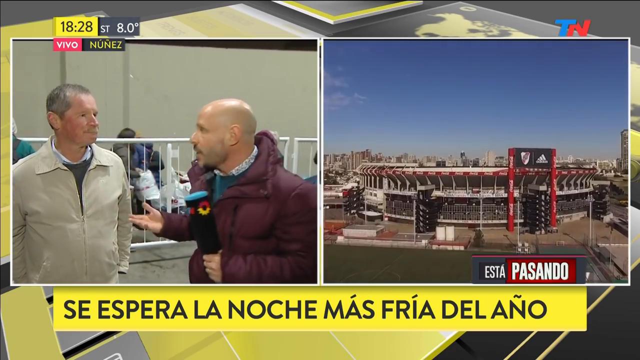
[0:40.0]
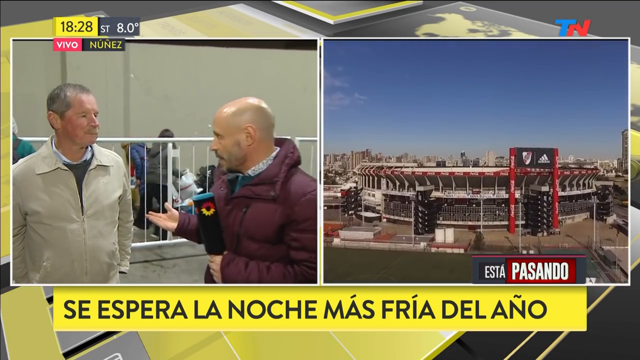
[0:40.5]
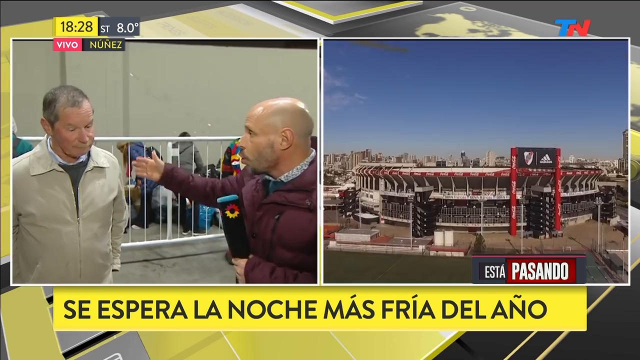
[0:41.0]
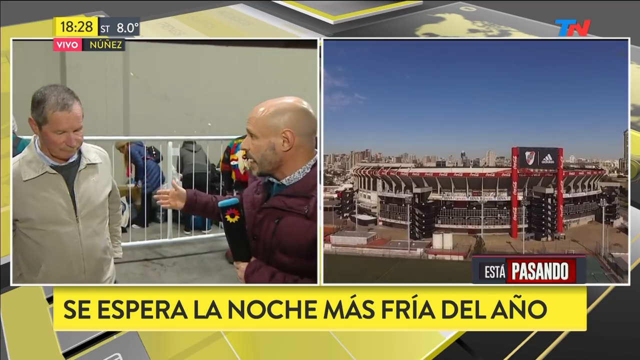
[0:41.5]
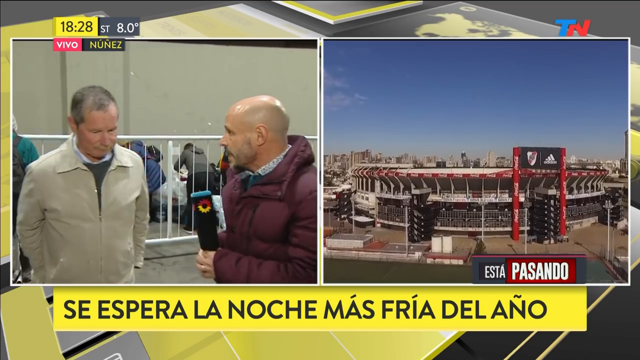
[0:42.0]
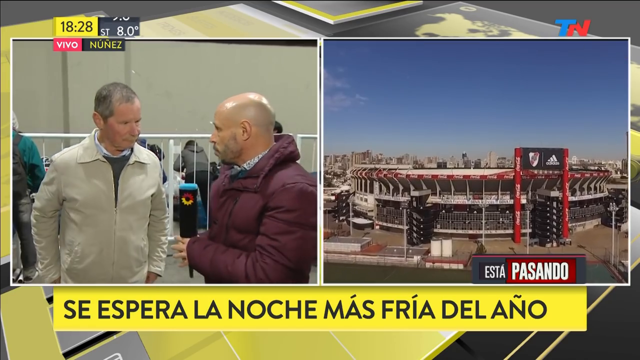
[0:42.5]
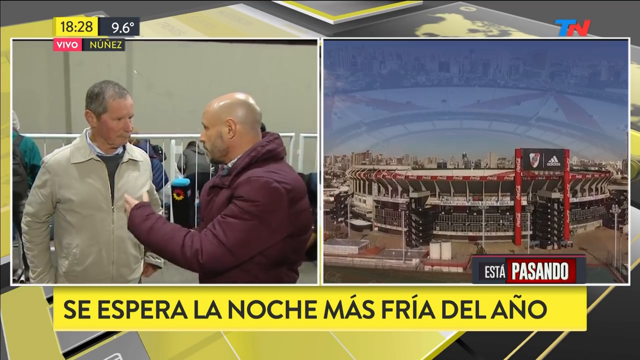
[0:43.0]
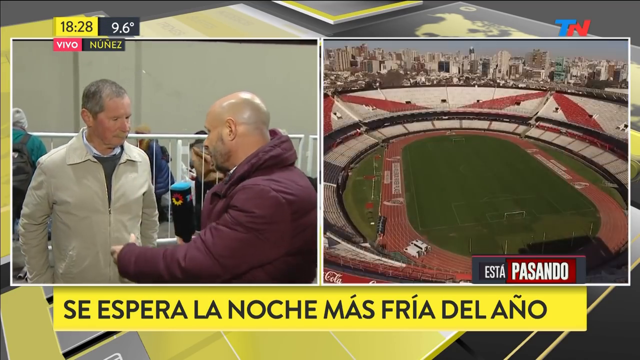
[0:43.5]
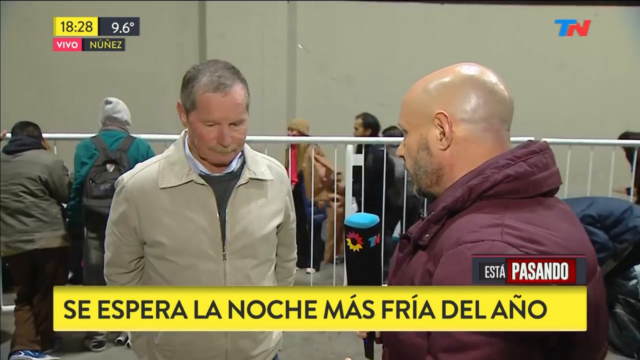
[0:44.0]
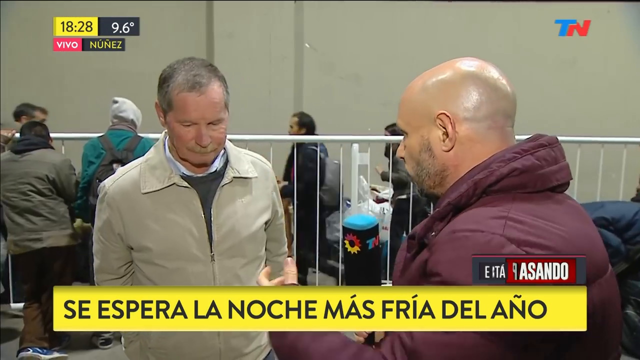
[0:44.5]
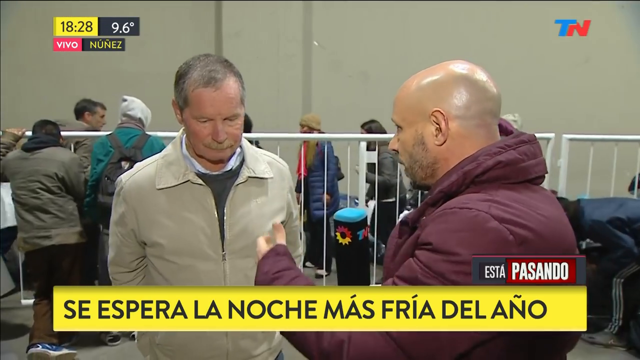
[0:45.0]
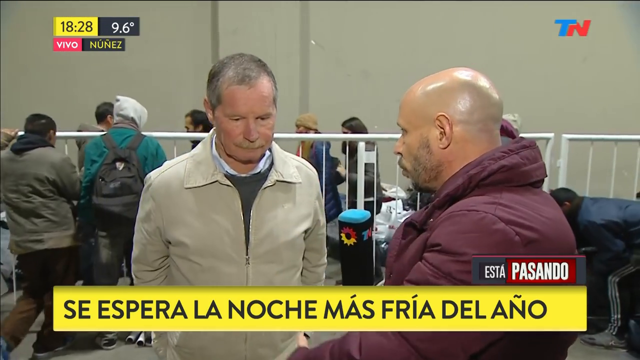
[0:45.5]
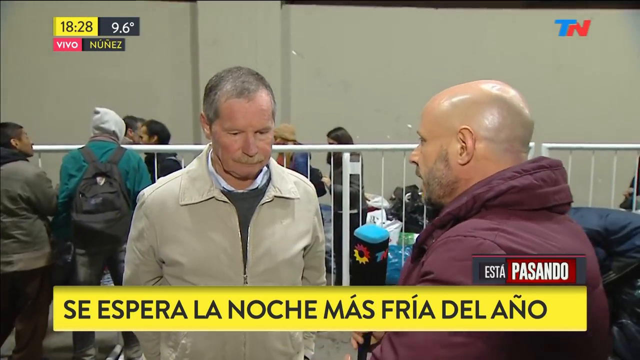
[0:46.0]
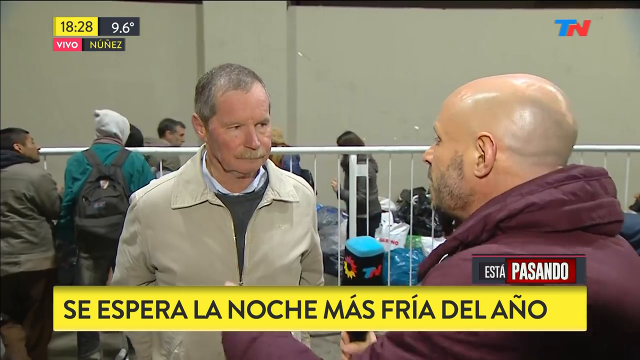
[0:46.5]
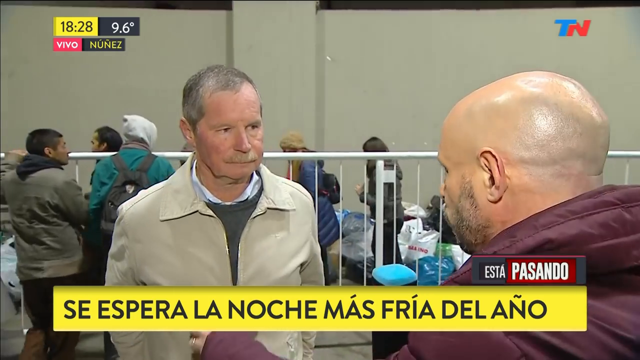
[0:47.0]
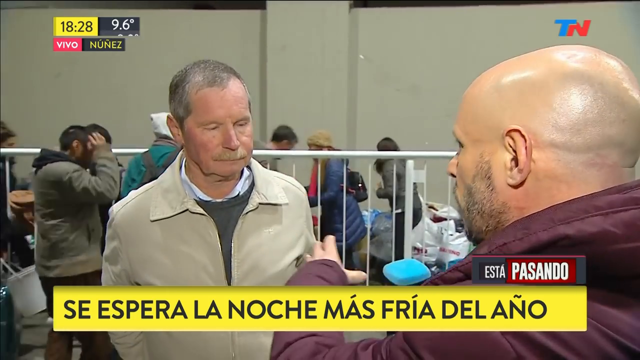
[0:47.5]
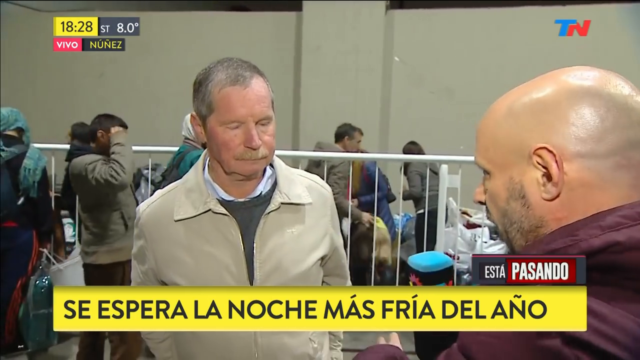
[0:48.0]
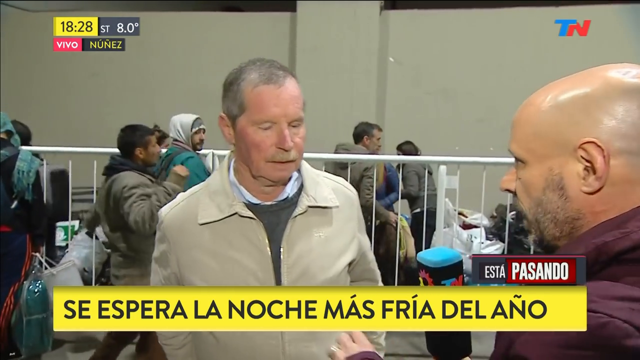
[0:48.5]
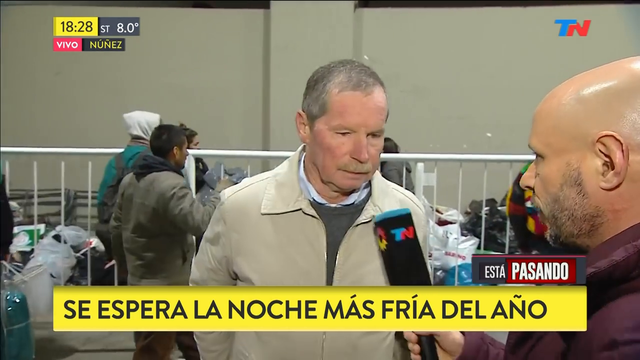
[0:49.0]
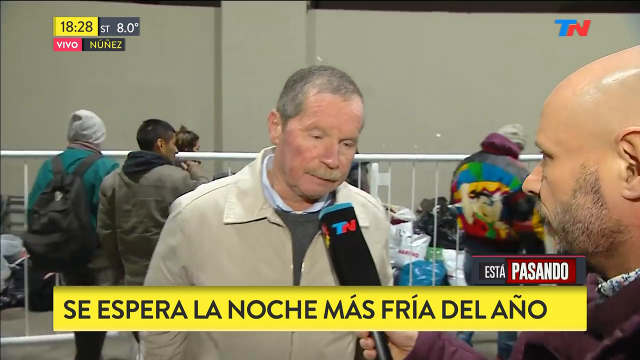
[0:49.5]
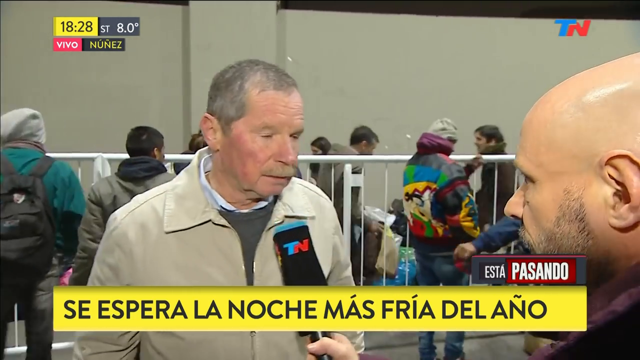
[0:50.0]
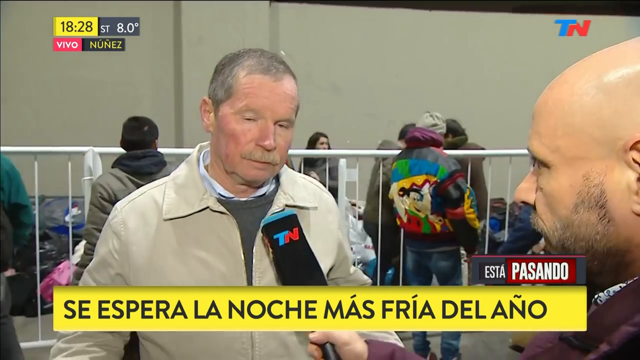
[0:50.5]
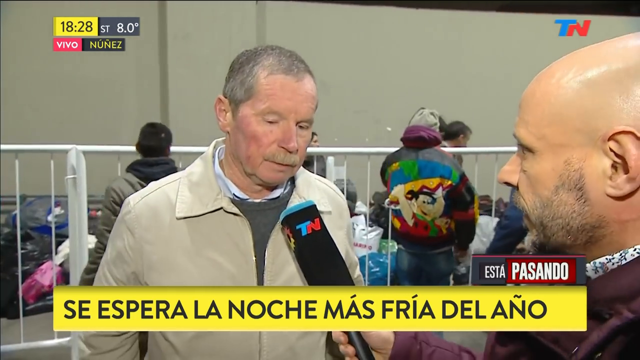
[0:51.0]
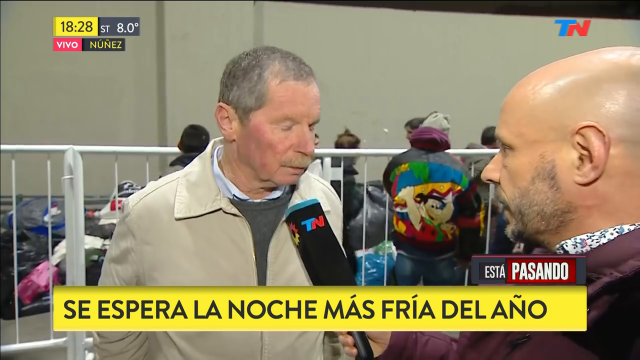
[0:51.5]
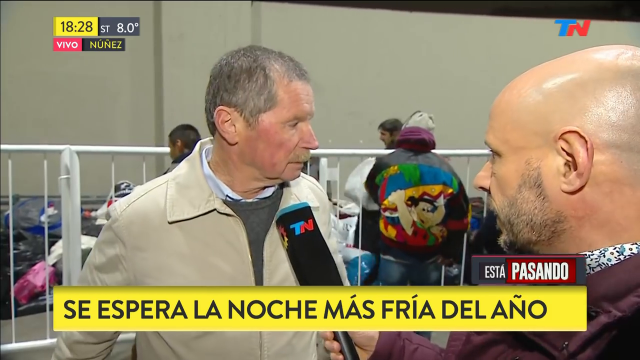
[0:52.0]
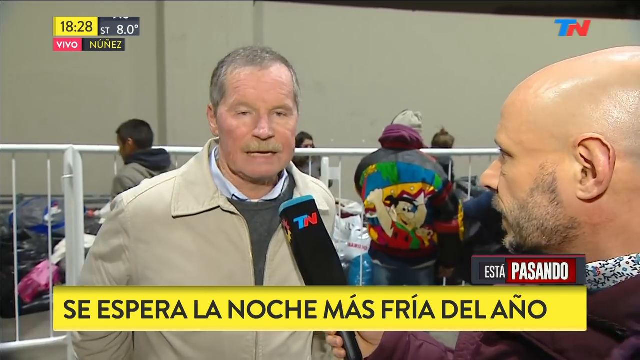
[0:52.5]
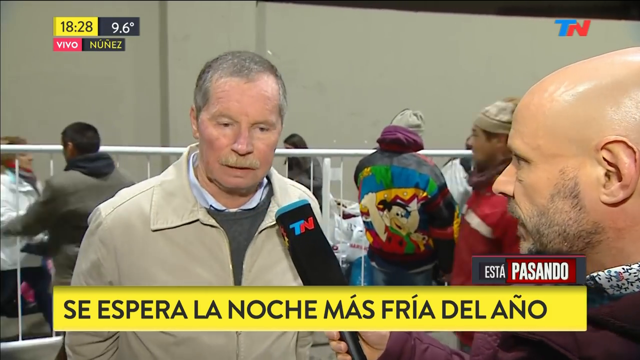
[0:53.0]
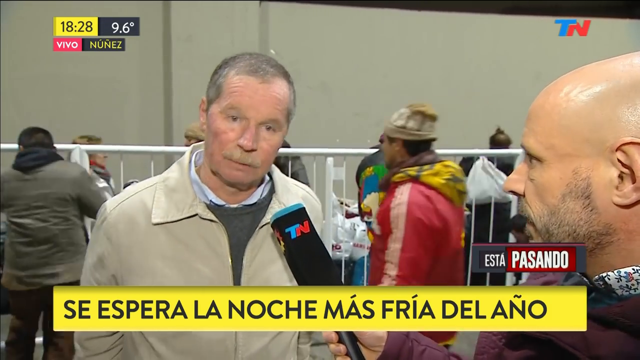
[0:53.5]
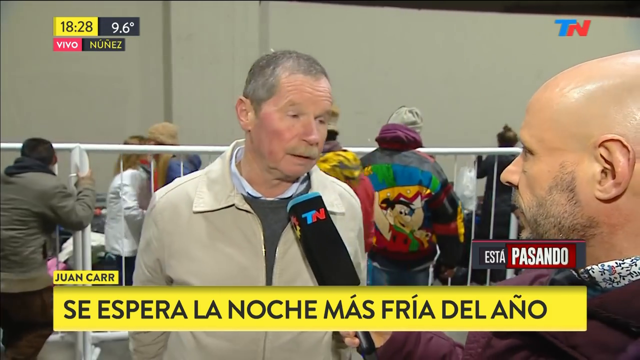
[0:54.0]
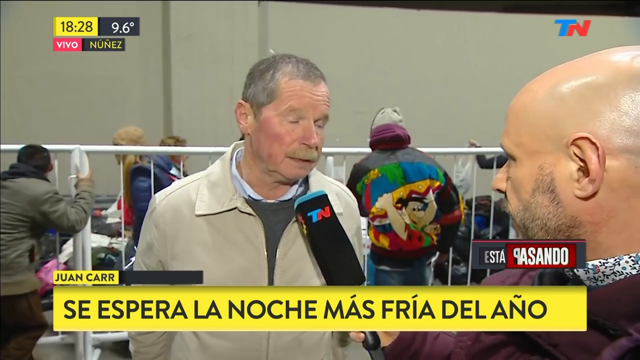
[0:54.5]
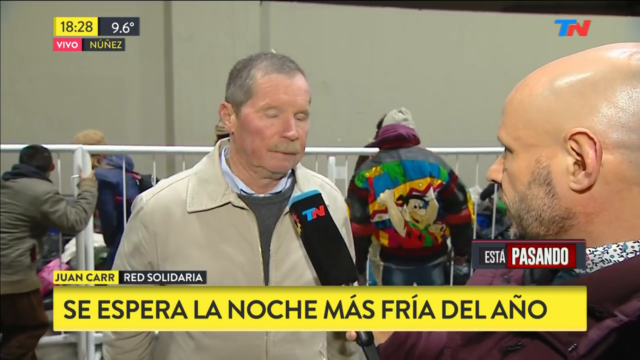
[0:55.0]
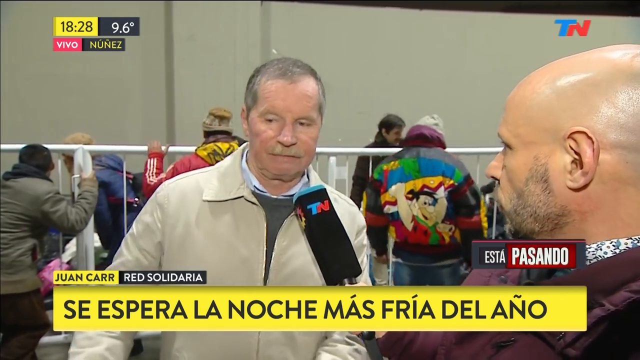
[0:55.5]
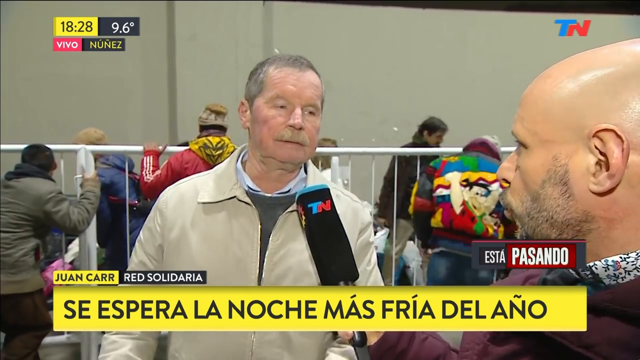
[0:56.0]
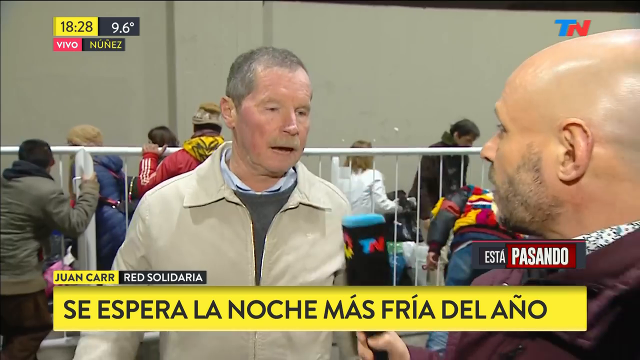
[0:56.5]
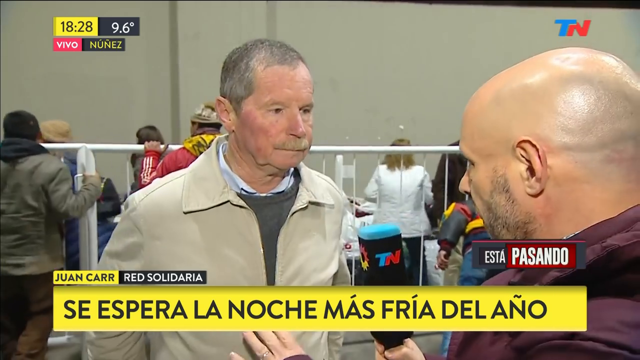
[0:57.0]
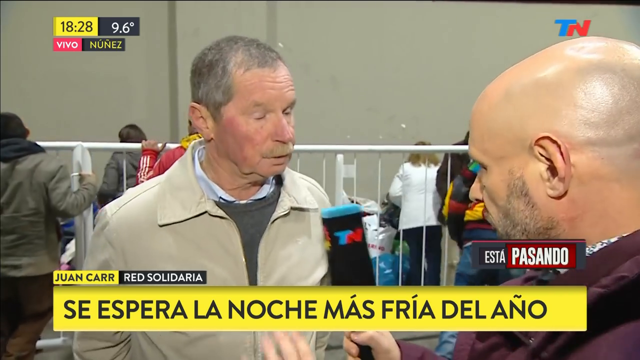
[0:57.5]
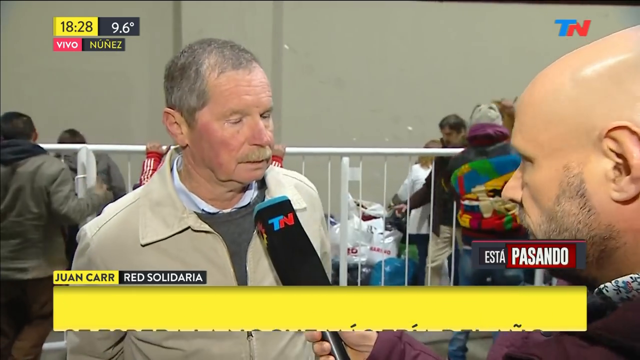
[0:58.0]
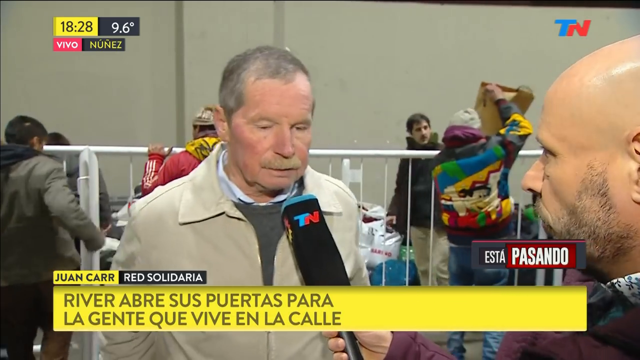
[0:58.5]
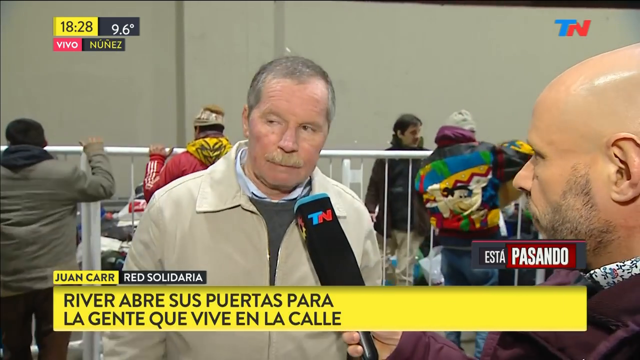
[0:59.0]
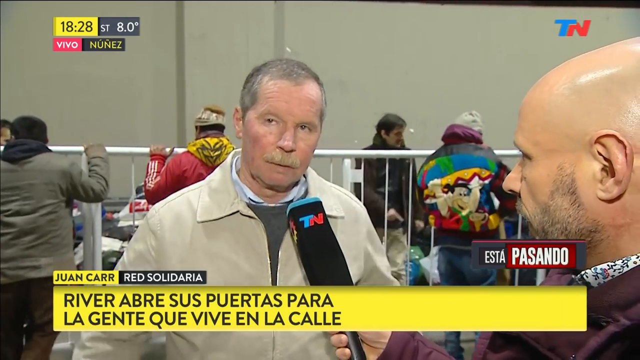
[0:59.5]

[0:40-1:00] The man standing next to the journalist now seems to get a chance to speak. On the other side is a stadium with red and white seats. The journalist continues the interview as the man talks; he is apparently named Juan Carr, from Red Solidaria.